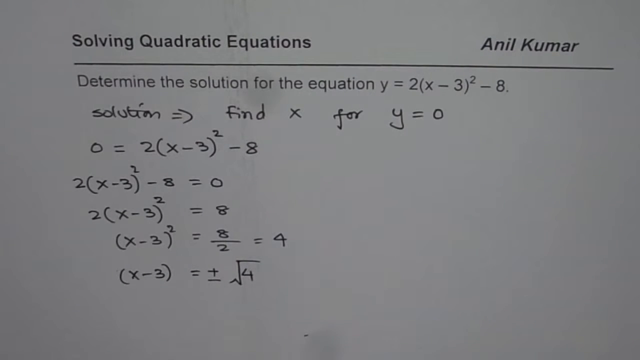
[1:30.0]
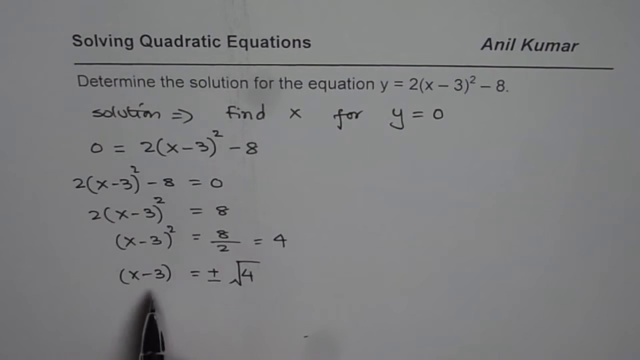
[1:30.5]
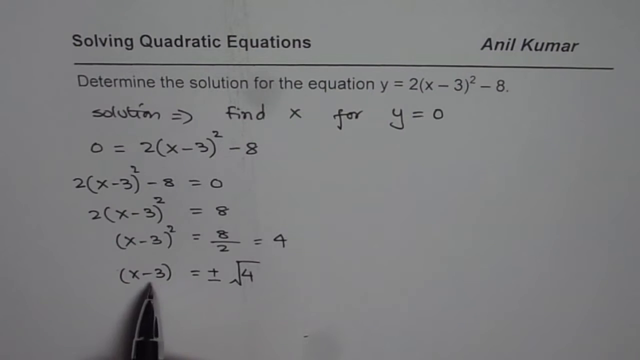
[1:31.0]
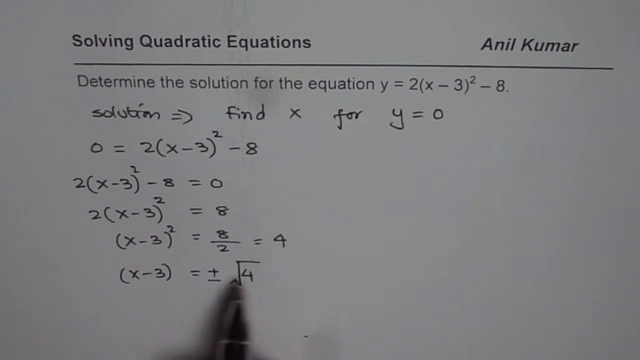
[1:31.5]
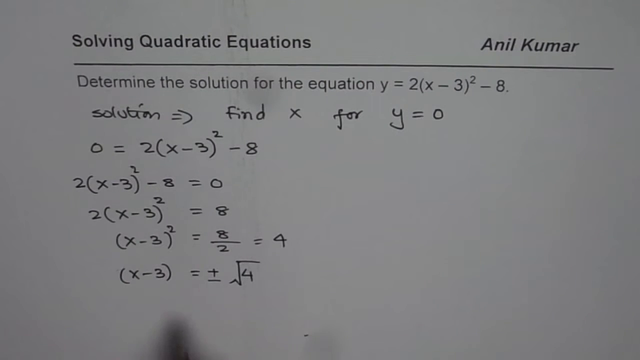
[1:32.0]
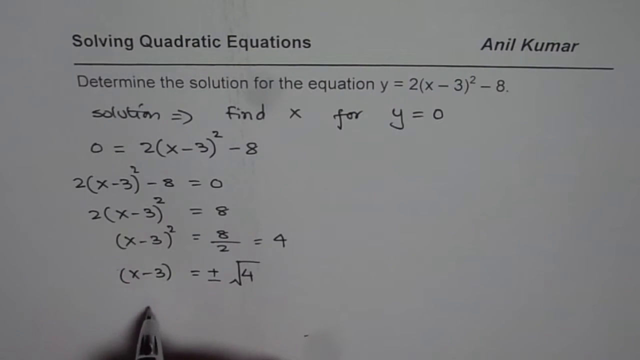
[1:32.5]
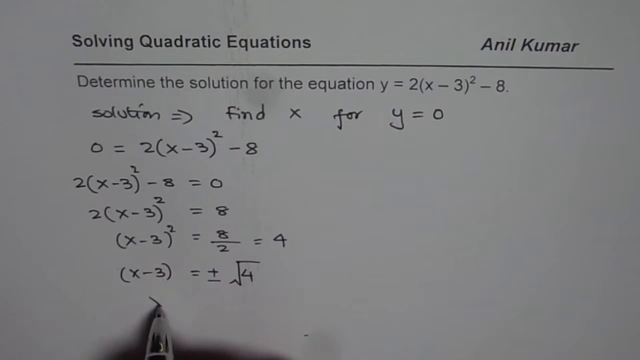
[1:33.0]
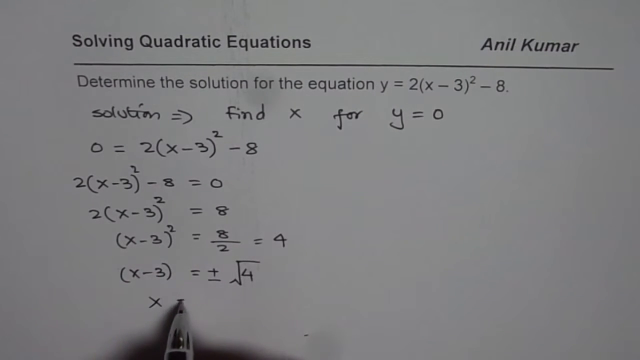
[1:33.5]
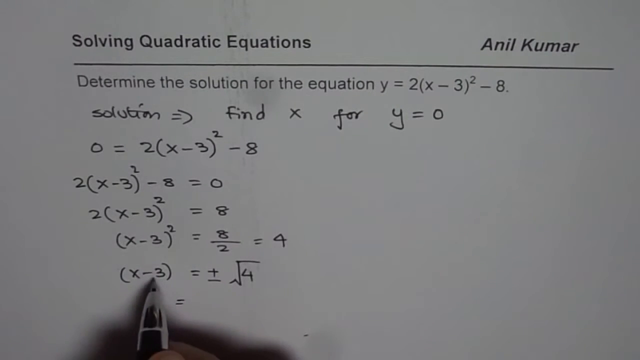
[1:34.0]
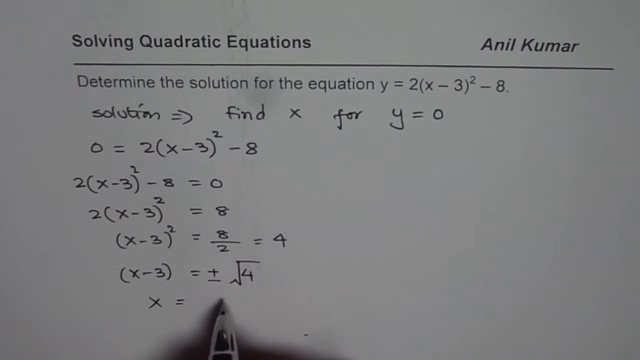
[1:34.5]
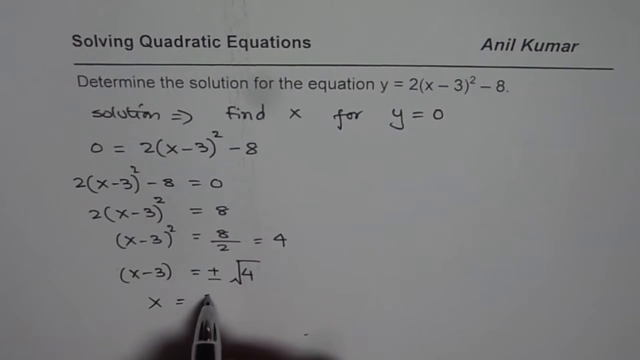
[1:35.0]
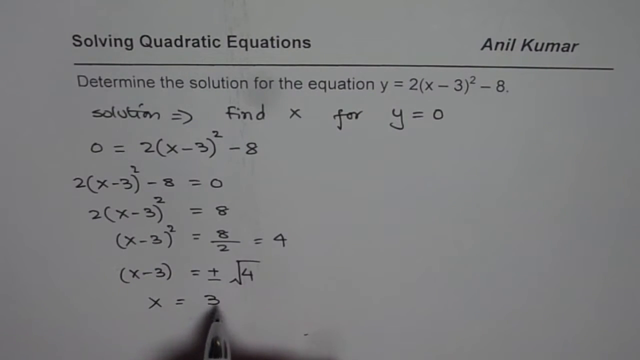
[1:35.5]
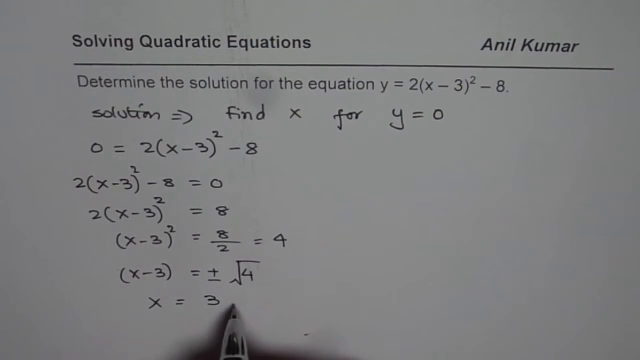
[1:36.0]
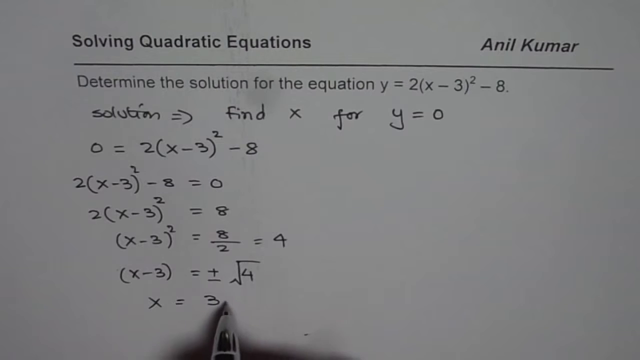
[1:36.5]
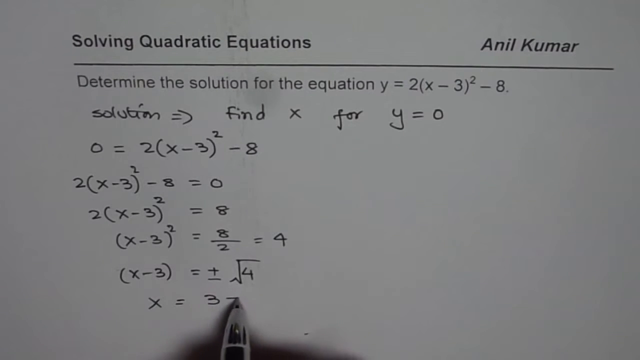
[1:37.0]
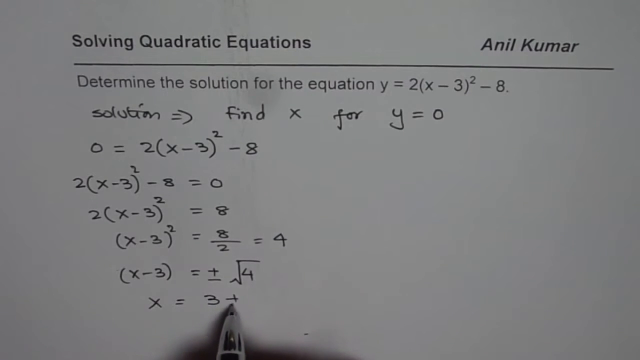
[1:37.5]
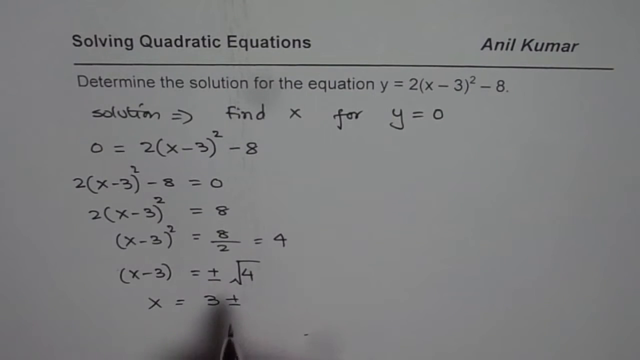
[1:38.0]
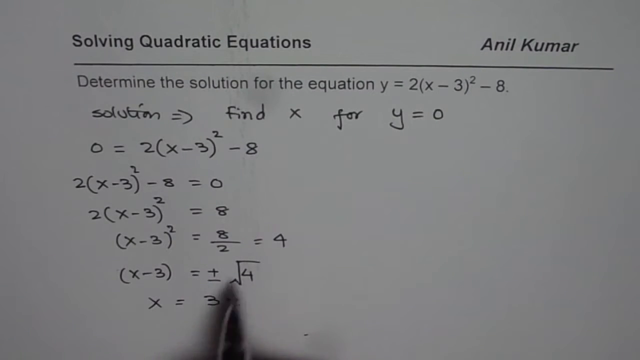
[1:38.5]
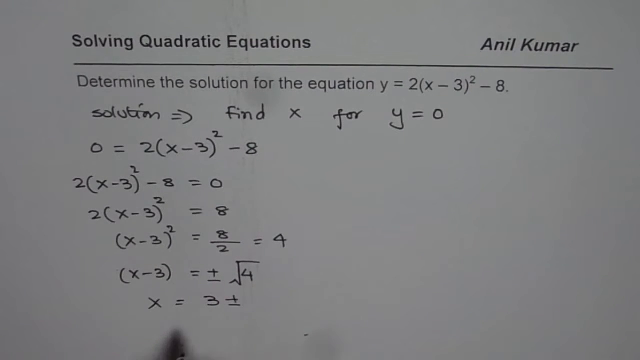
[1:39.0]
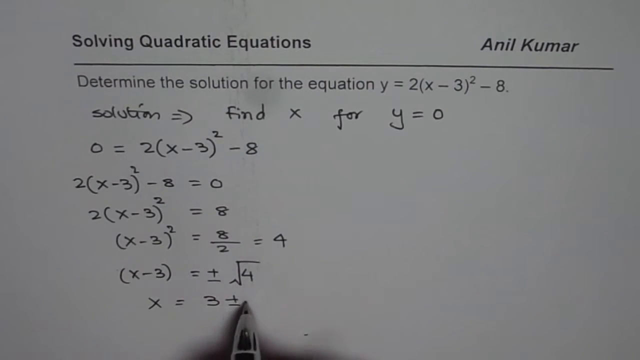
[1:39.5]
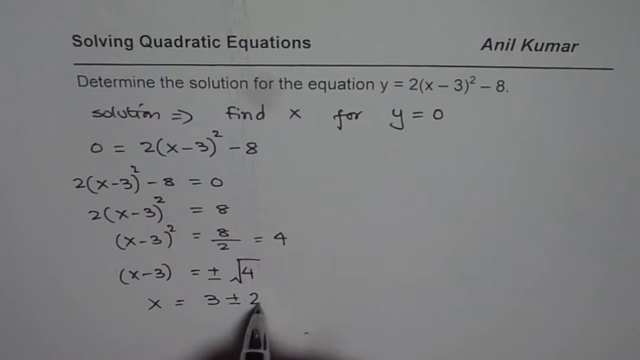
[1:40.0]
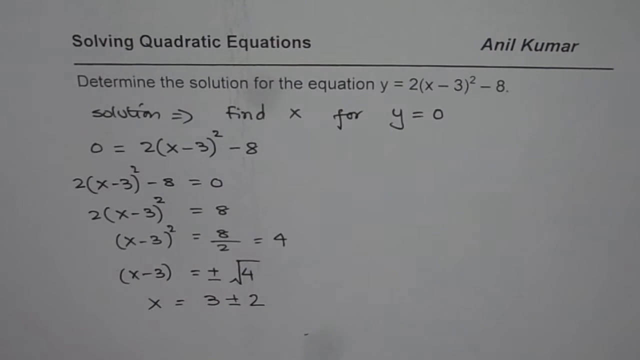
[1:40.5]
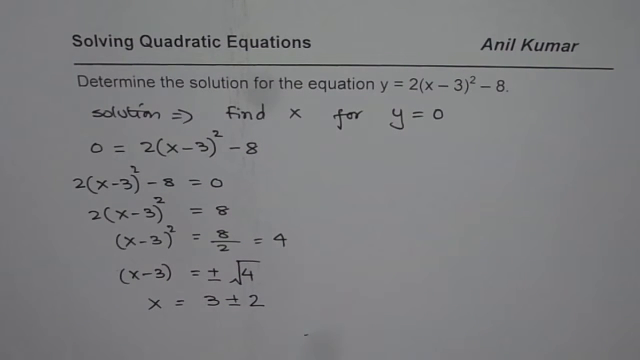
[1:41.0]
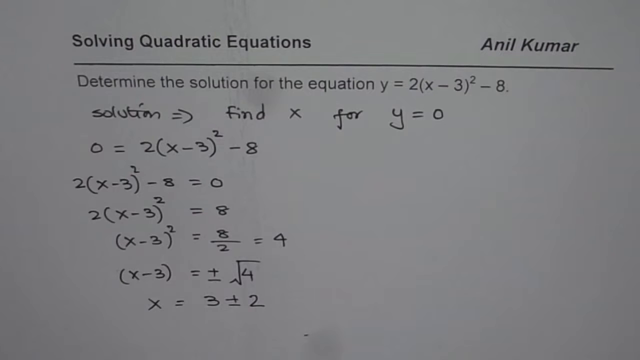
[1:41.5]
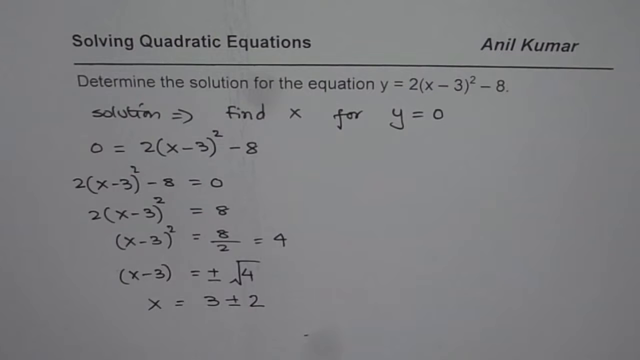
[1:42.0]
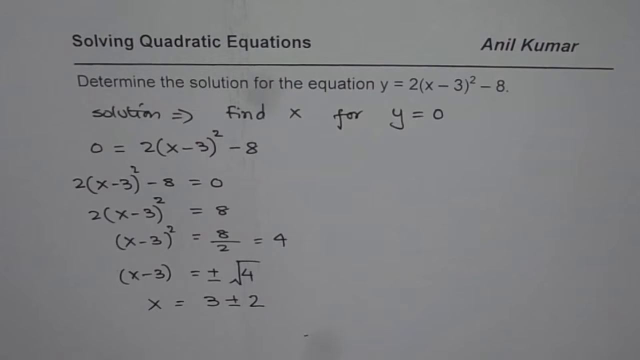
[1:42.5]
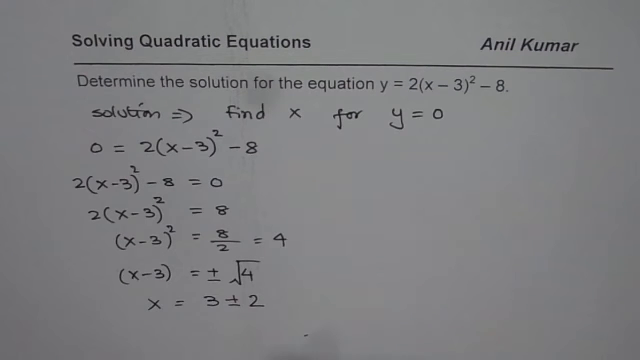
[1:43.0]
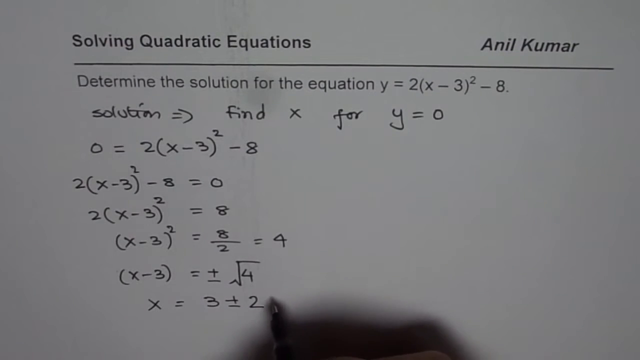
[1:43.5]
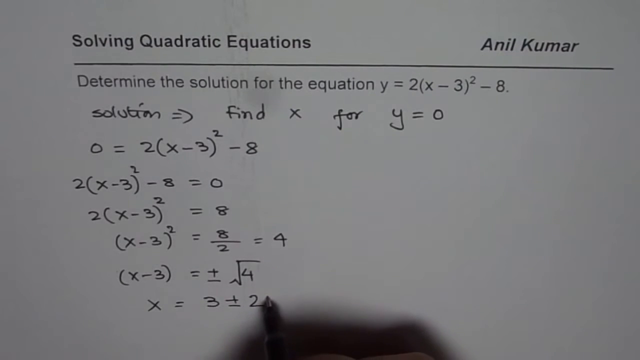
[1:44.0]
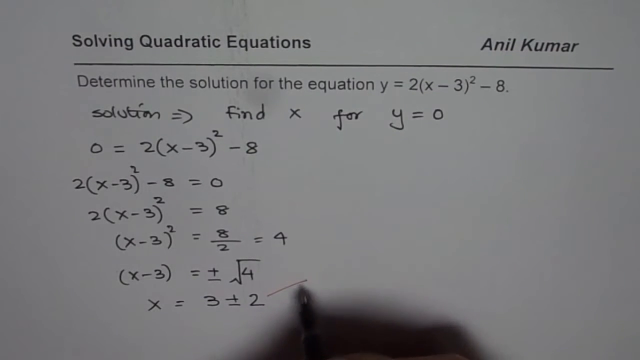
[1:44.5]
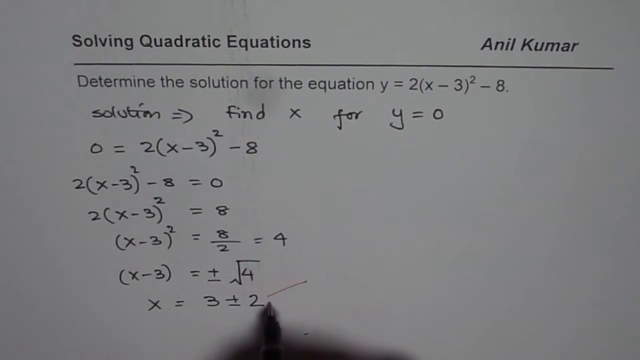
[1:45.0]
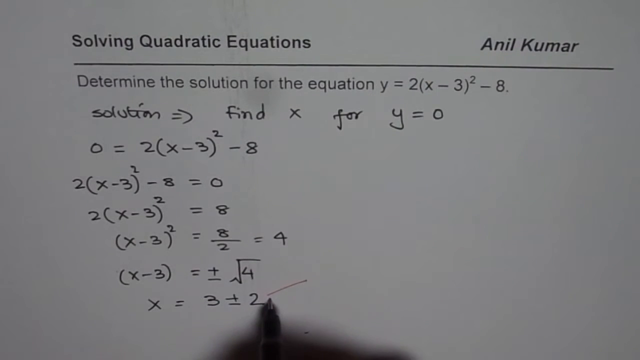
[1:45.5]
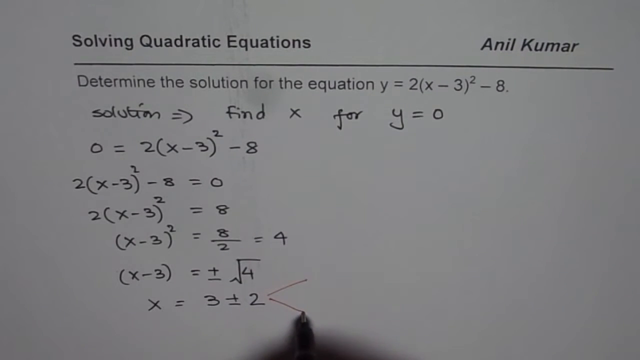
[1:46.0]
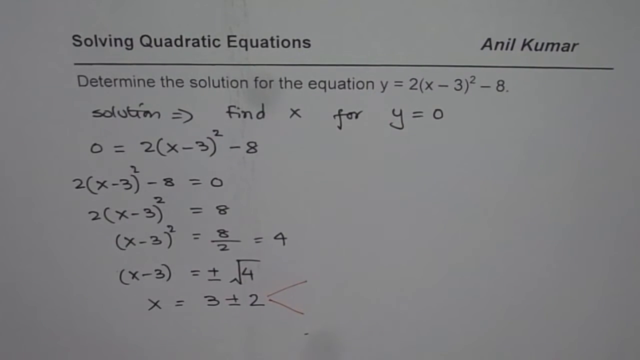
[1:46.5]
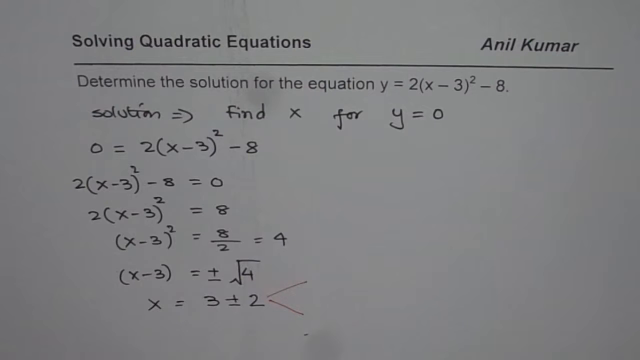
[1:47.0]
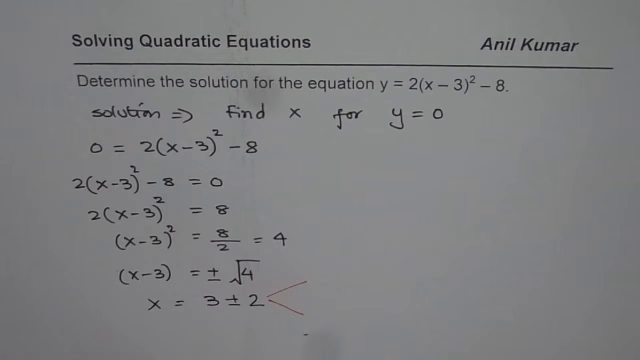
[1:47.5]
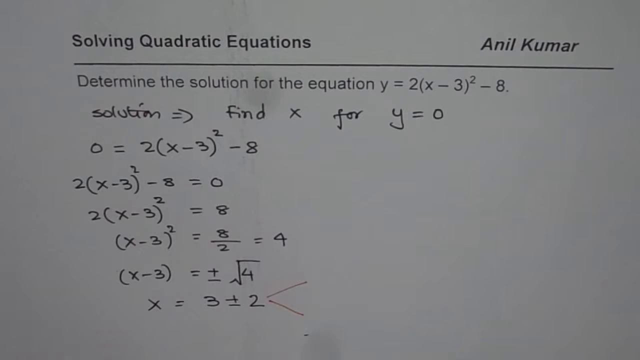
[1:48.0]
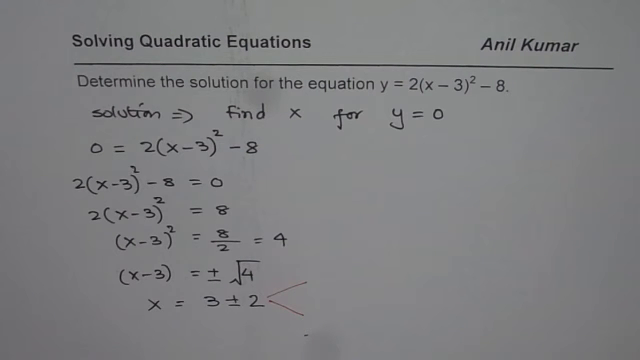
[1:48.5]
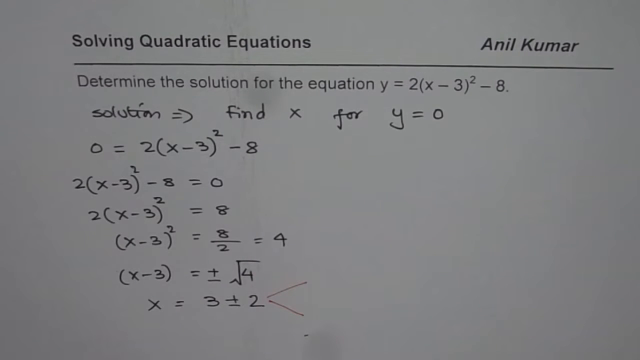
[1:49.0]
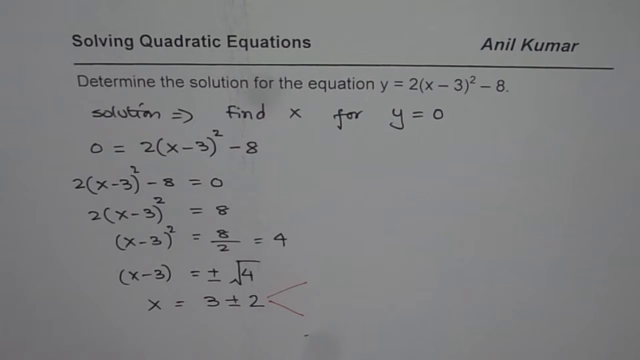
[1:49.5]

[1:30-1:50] From the top, the paper shows "solving quadratic equations", the name, the equation to solve, "solution = find x for y = 0", "0 = 2(x − 3)² − 8", "2(x − 3)² − 8 = 0", "(x − 3)² = 8/2 = 4", and then "x = 3 + 2". Some lines are drawn. The man's hand holds a black pen with black ink and wears a silver ring on the middle finger, writing the solution on the white paper.